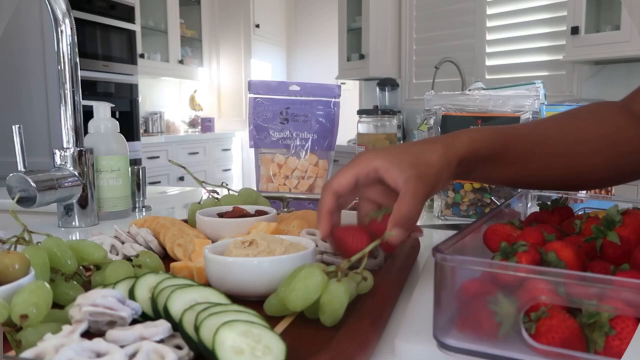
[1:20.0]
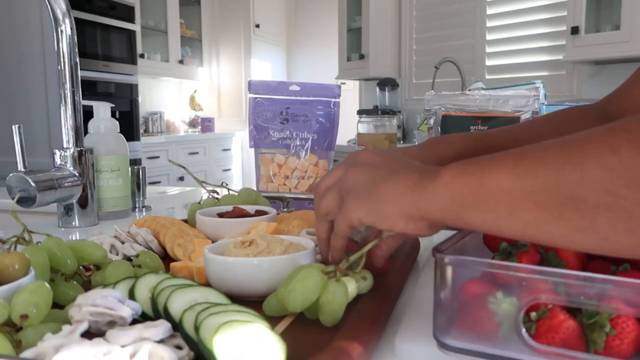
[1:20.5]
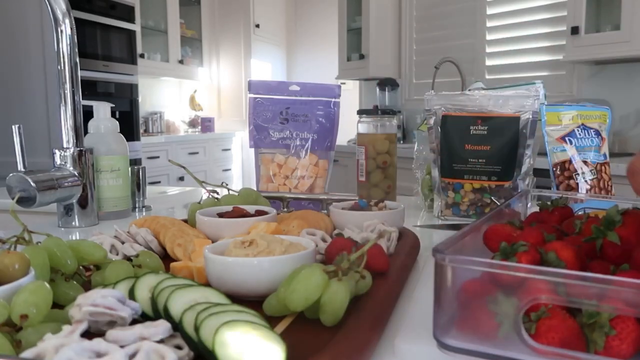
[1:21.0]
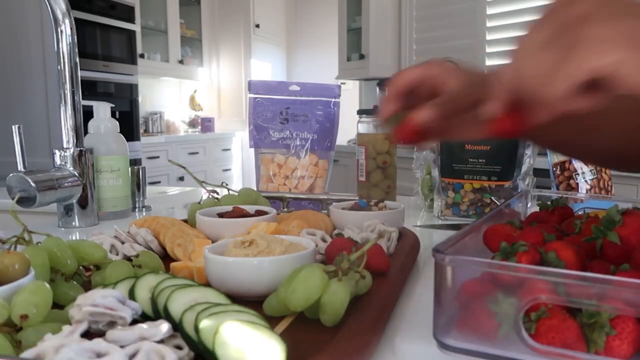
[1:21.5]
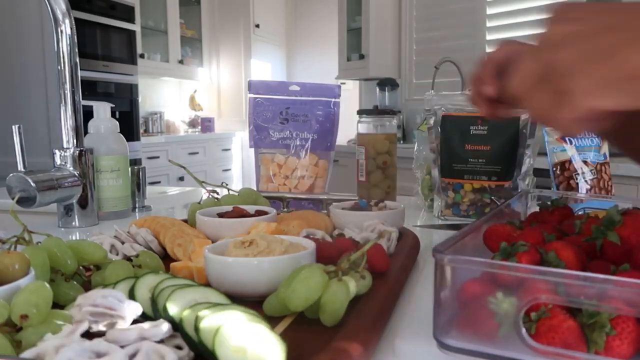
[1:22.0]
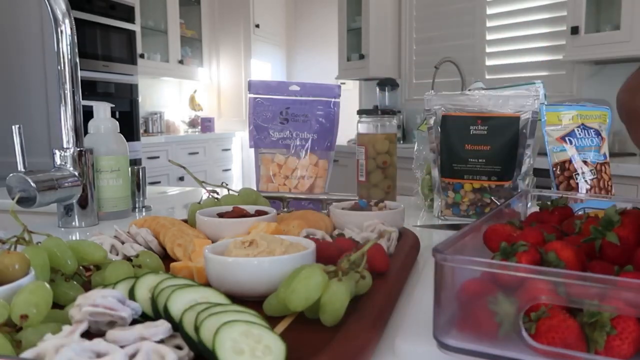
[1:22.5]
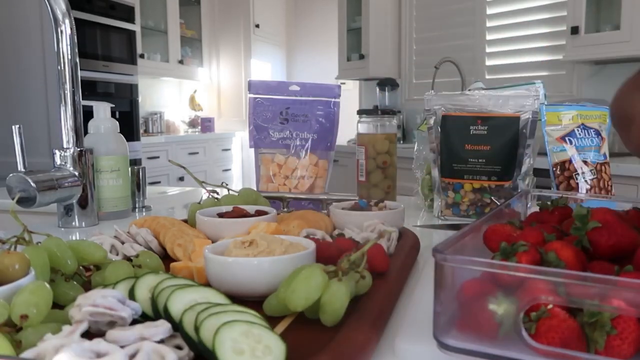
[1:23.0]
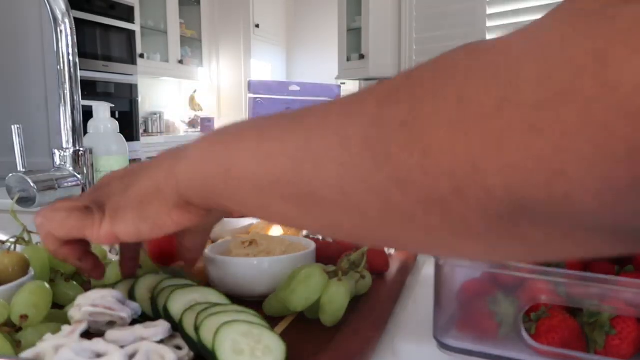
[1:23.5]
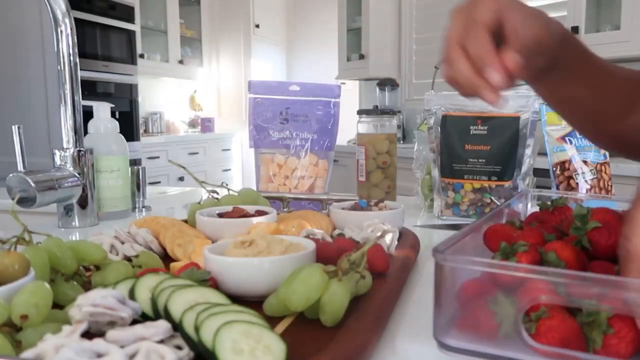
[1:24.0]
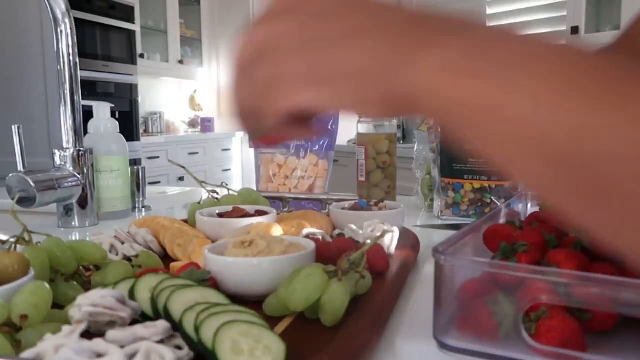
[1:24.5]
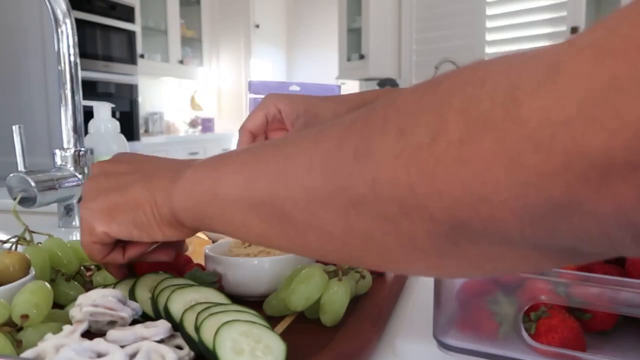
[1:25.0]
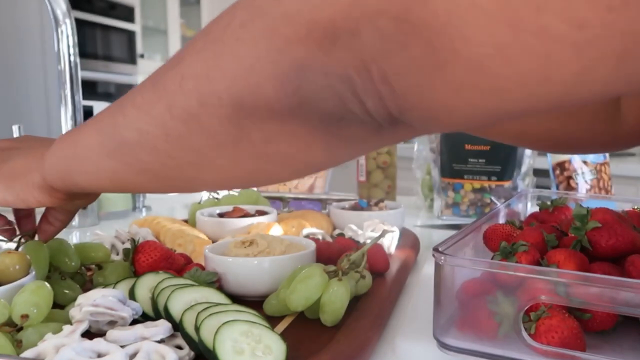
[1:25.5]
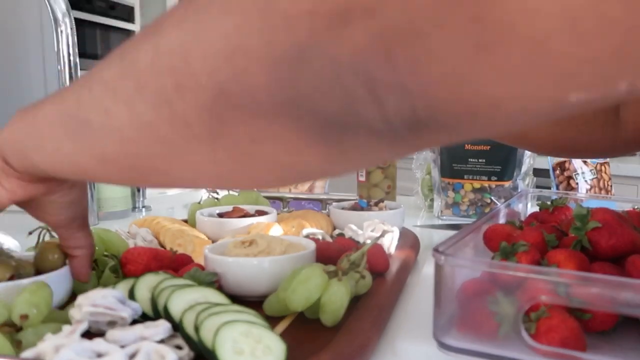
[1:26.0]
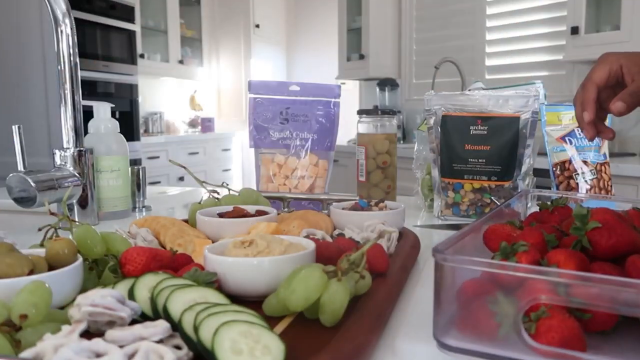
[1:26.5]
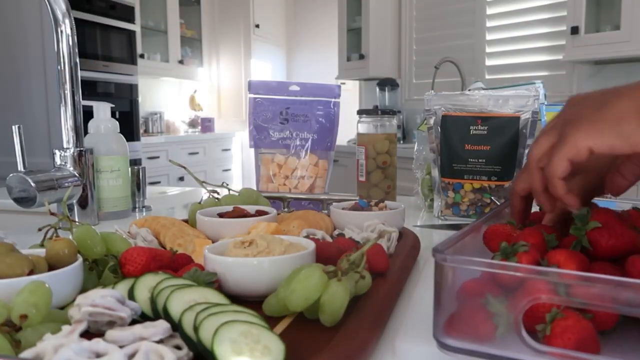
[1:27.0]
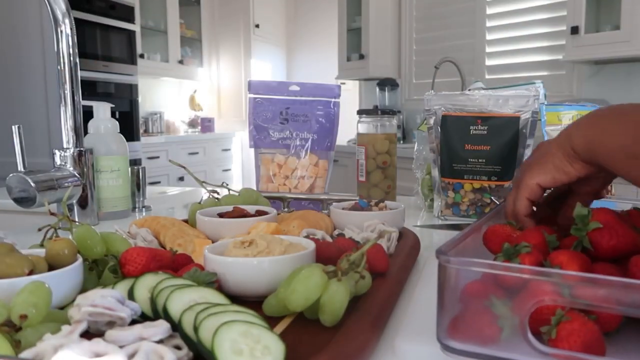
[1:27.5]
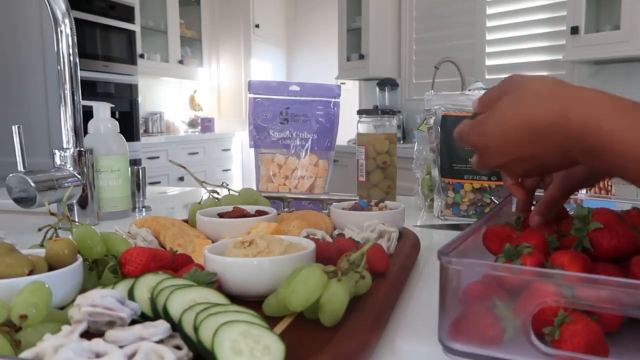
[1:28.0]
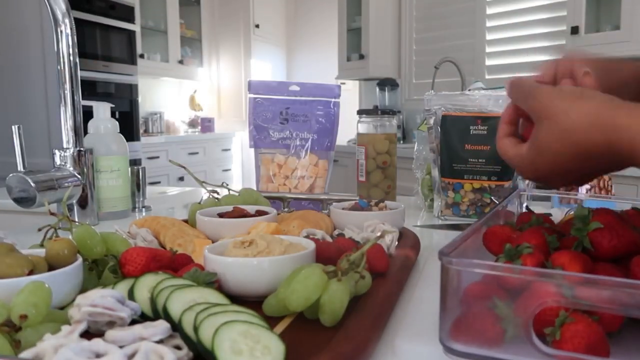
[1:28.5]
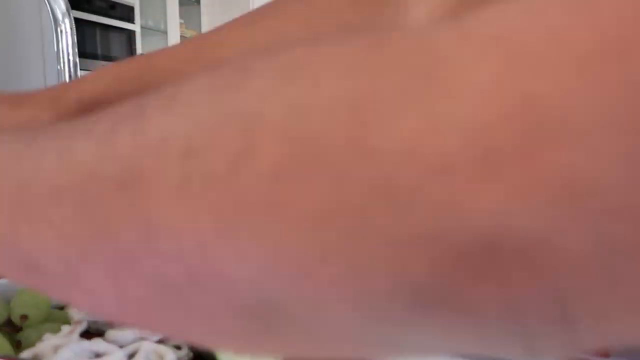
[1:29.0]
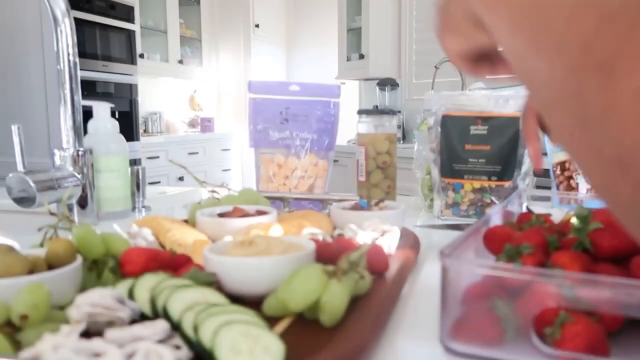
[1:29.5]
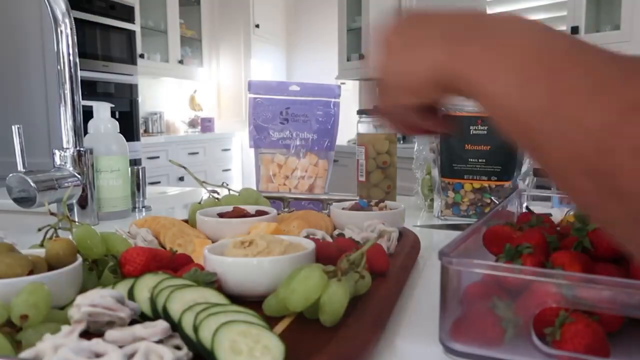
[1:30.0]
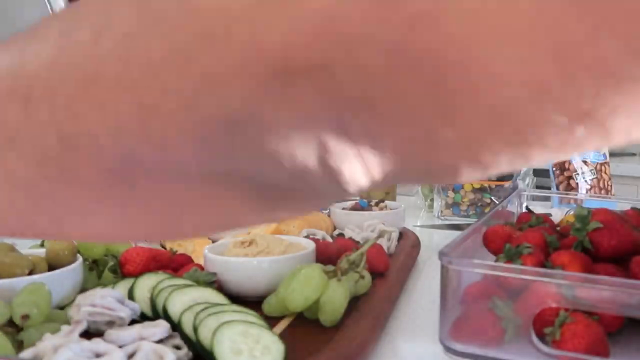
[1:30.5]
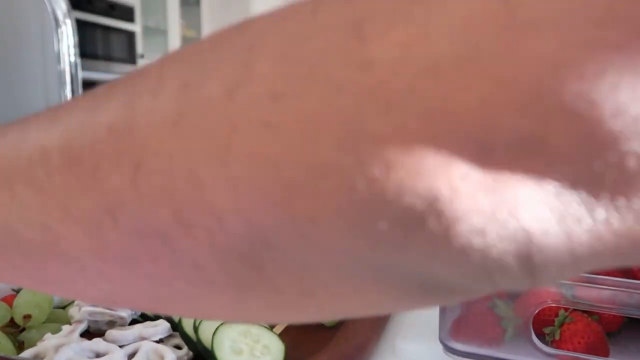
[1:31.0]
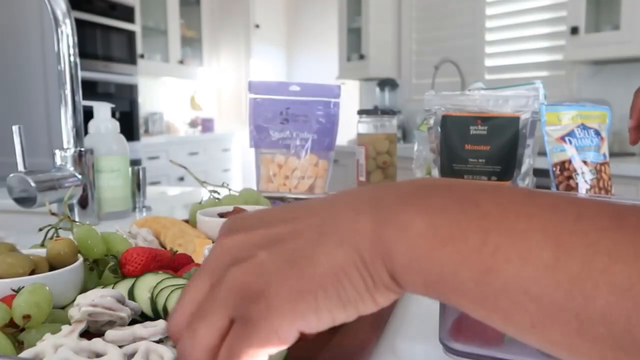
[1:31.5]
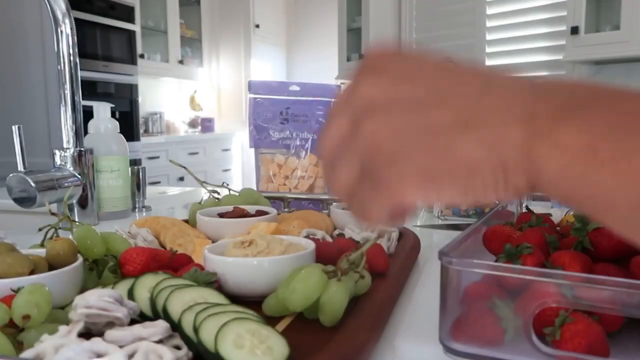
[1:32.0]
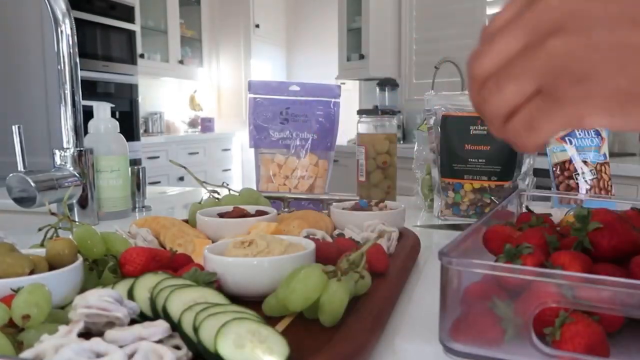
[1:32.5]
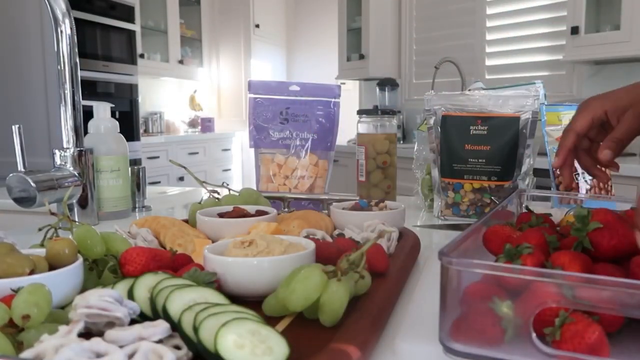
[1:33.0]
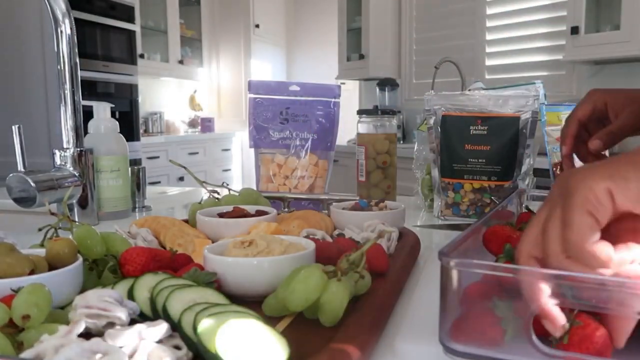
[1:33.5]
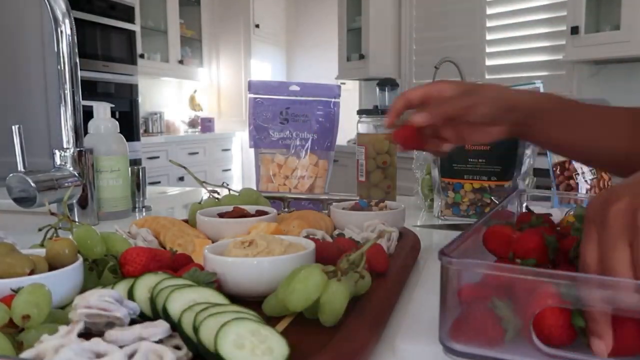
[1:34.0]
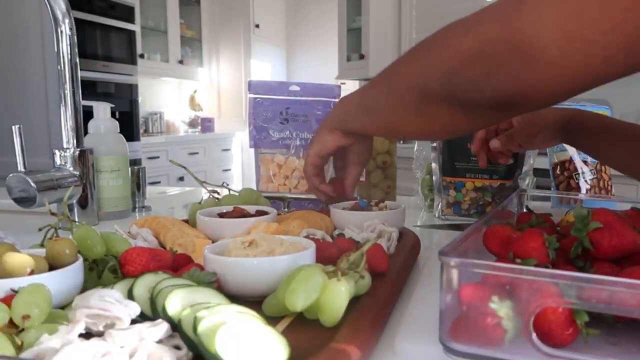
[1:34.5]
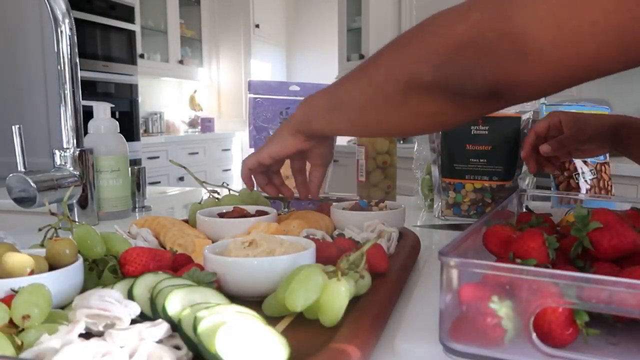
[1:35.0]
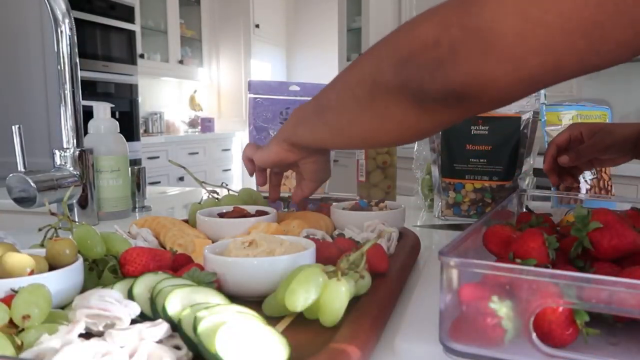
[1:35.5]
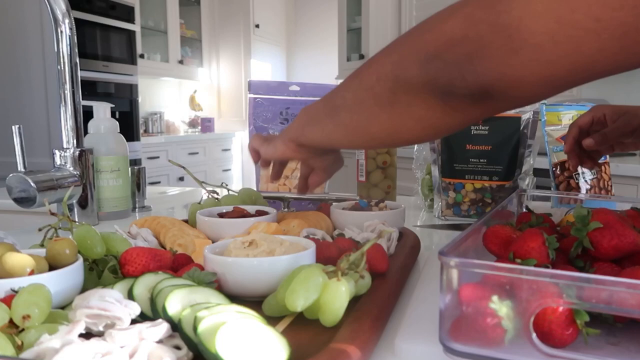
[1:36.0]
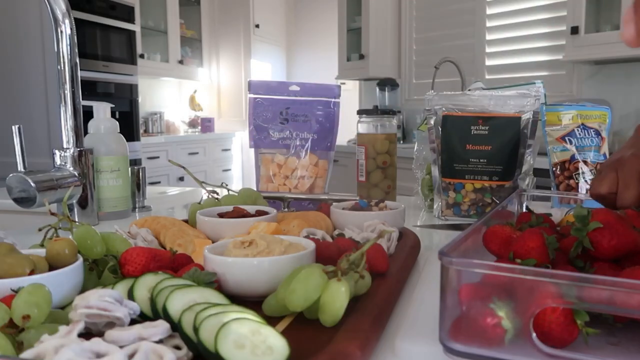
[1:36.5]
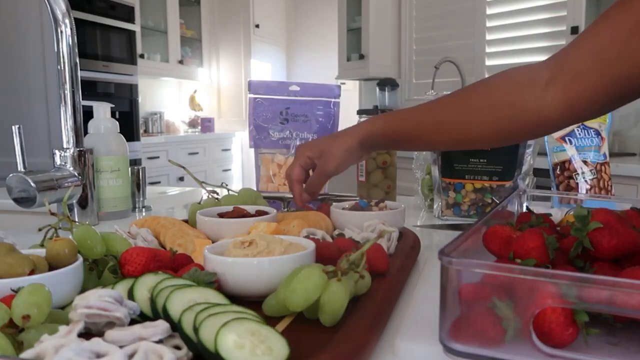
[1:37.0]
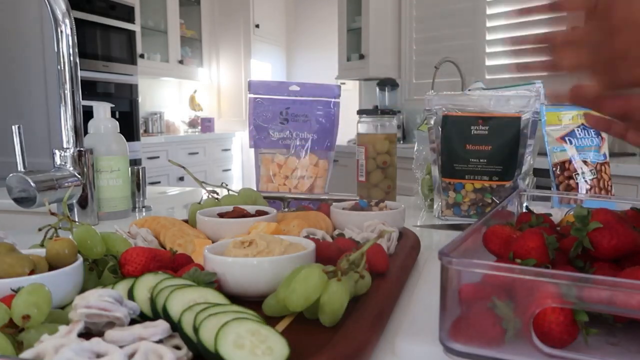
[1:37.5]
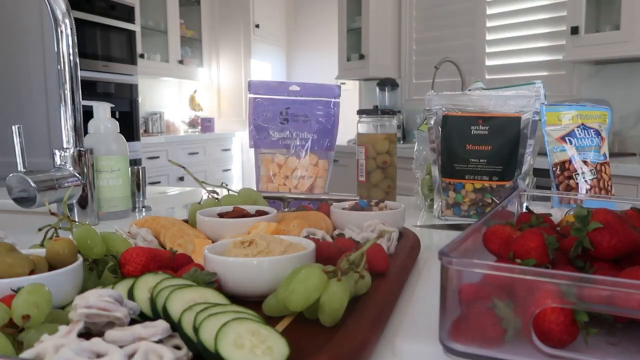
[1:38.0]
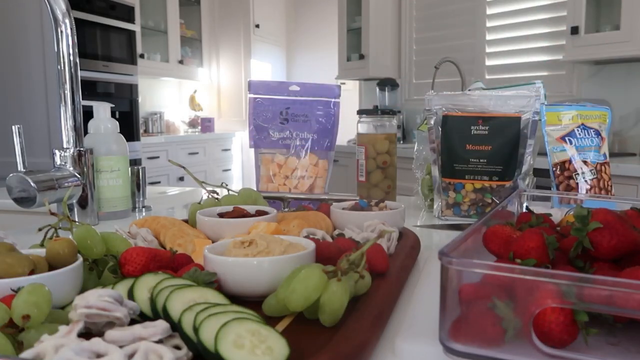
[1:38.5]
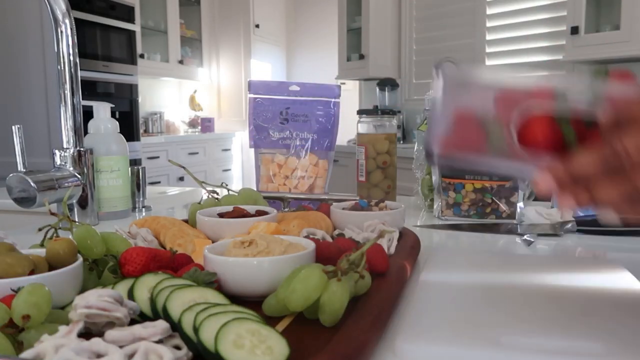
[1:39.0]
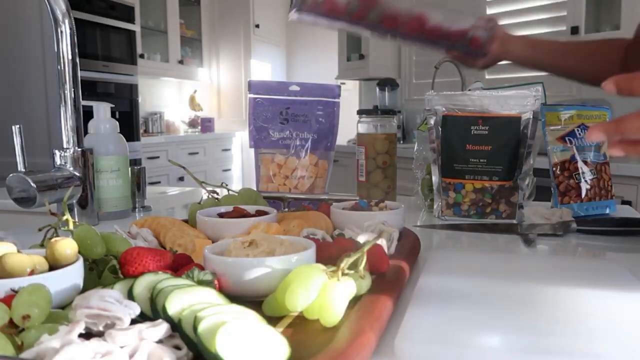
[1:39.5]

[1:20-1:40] The lady continues making her cheese board. On the board there is cucumber, cakes, biscuits and grapes, plus four bowls: one has a red cake, one has walnuts, one has sweets and one has olives. She also puts strawberries on top of the board. Everything is placed on the kitchen counter. There is hand wash, a tap for the kitchen sink, a microwave, an oven, a blender, another kitchen tap, white kitchen cupboards, a kitchen blind and a container used to store juices. She takes strawberries from a container, apparently from a fridge.